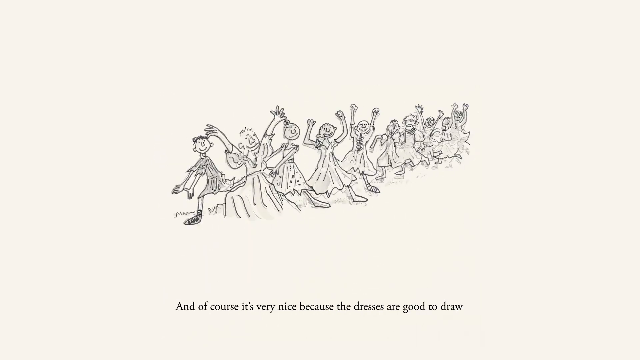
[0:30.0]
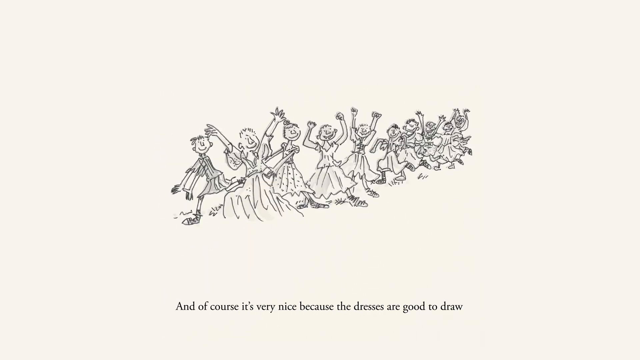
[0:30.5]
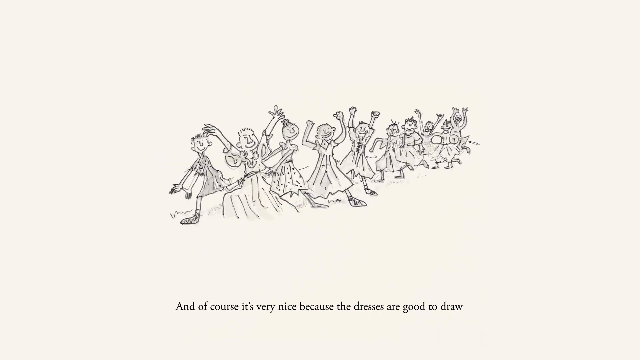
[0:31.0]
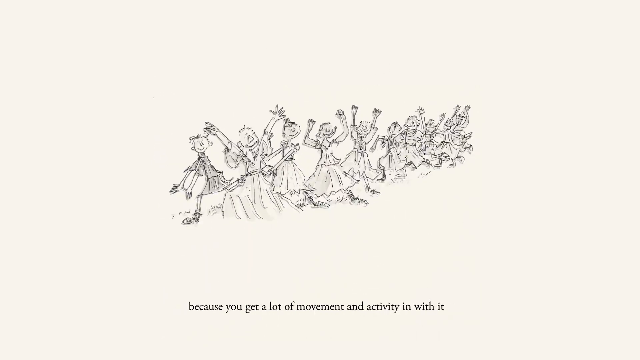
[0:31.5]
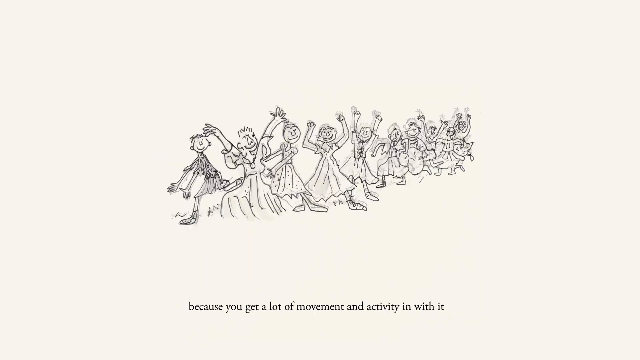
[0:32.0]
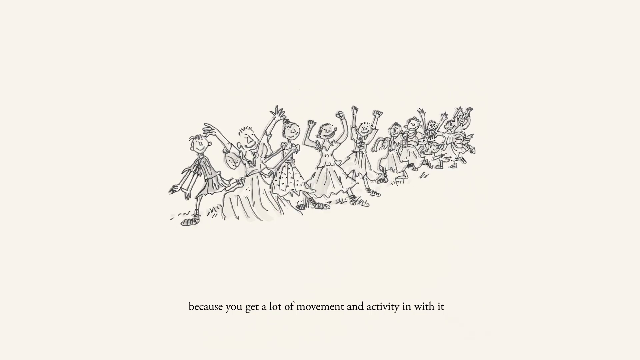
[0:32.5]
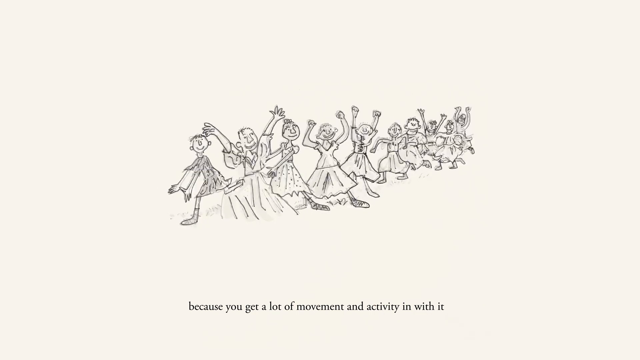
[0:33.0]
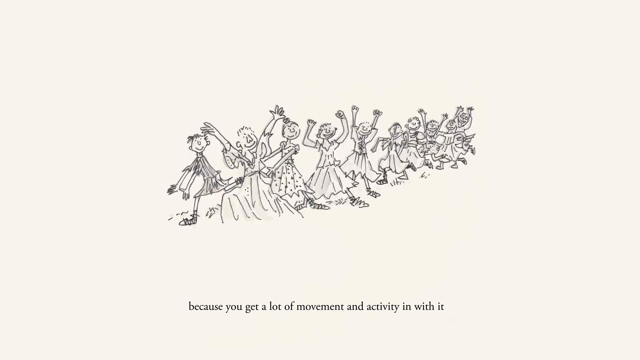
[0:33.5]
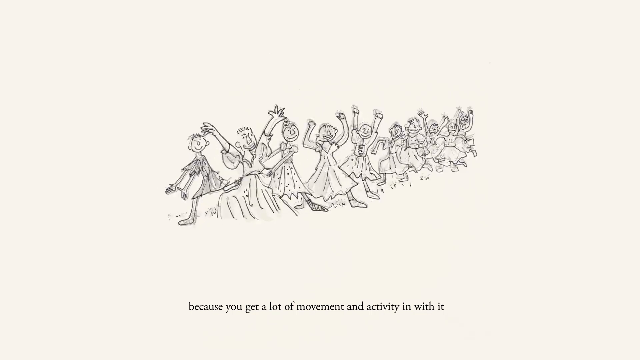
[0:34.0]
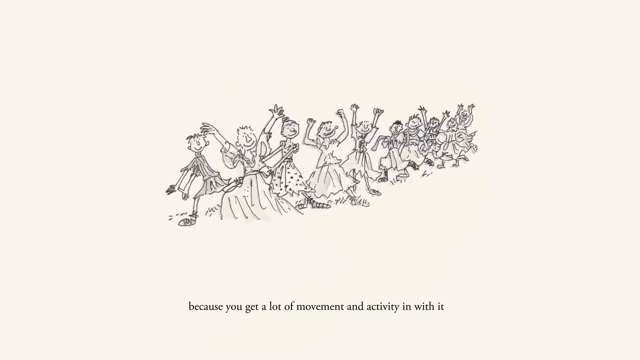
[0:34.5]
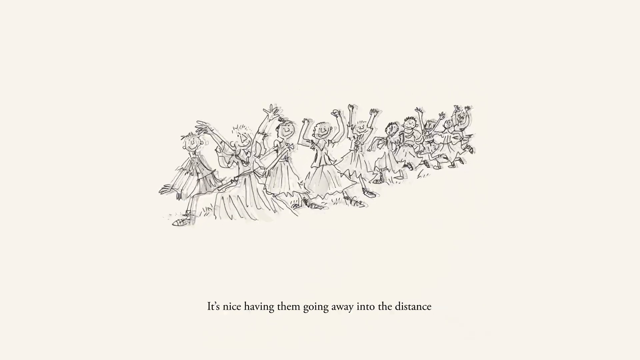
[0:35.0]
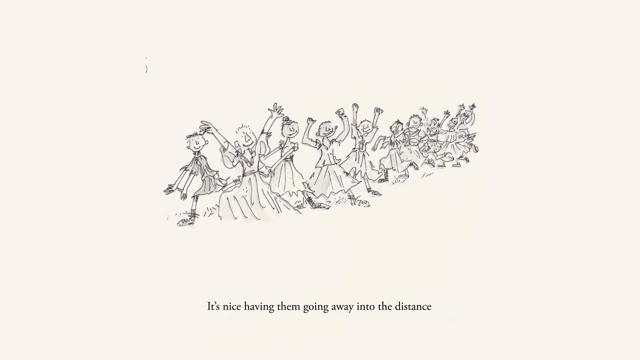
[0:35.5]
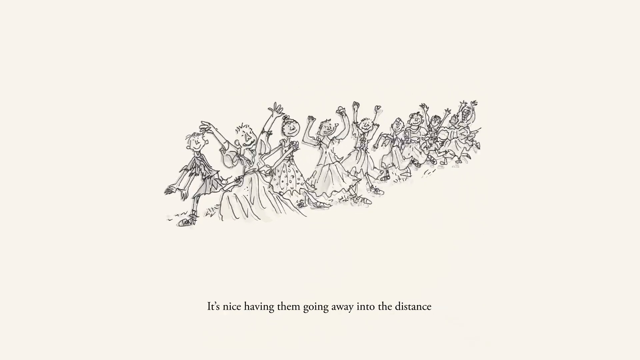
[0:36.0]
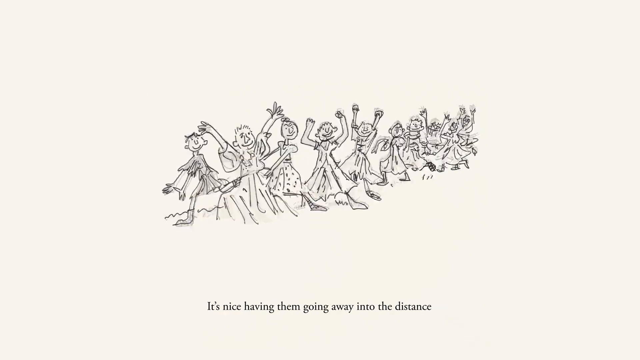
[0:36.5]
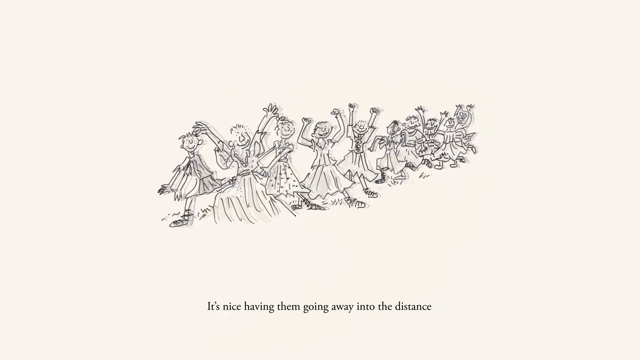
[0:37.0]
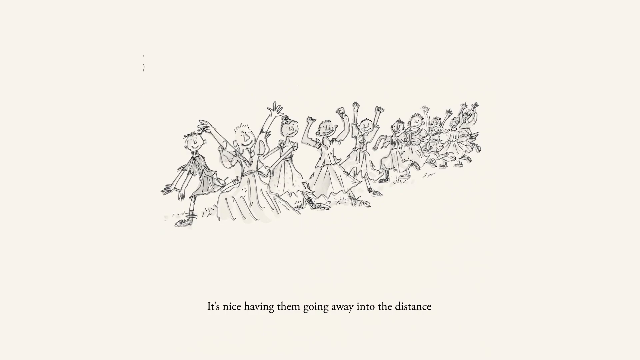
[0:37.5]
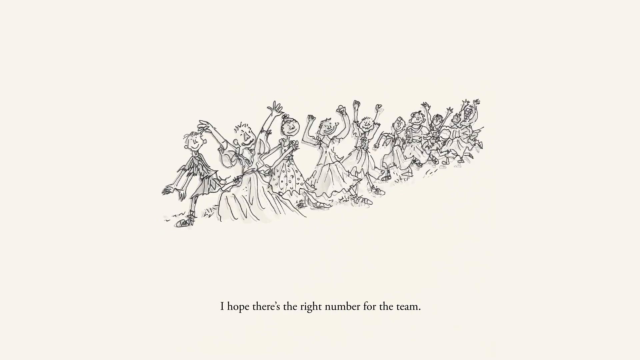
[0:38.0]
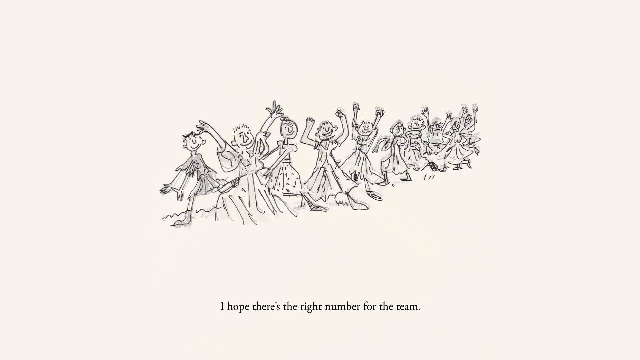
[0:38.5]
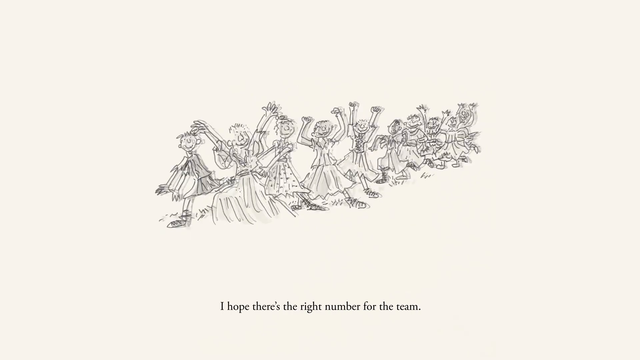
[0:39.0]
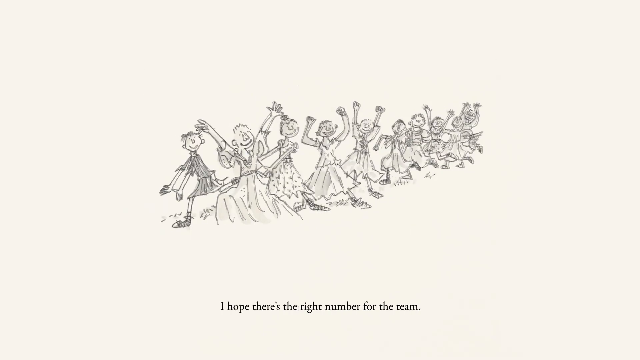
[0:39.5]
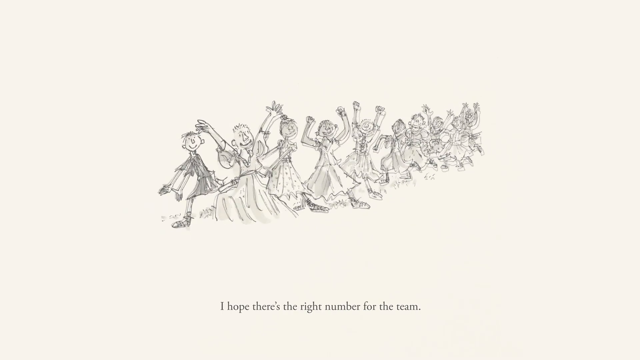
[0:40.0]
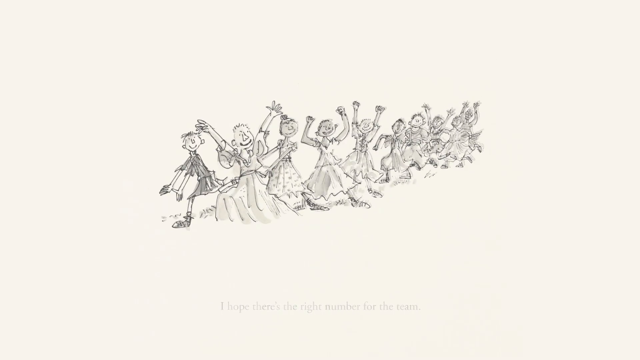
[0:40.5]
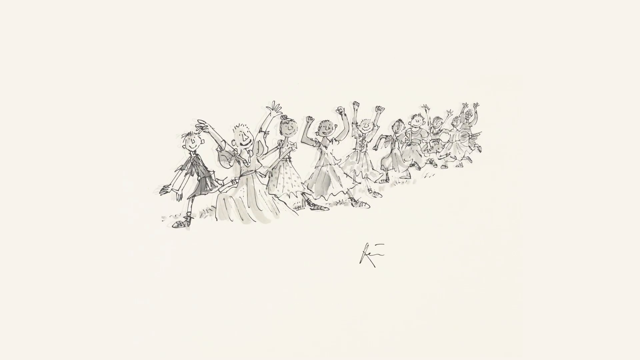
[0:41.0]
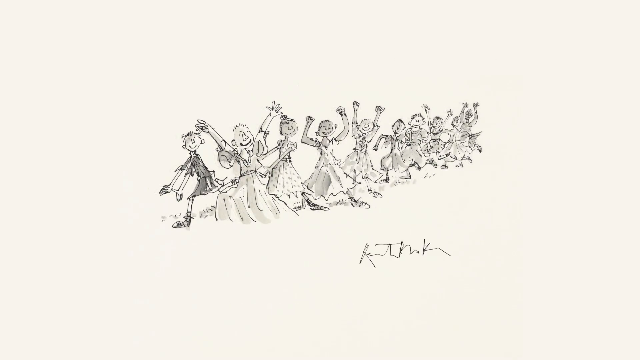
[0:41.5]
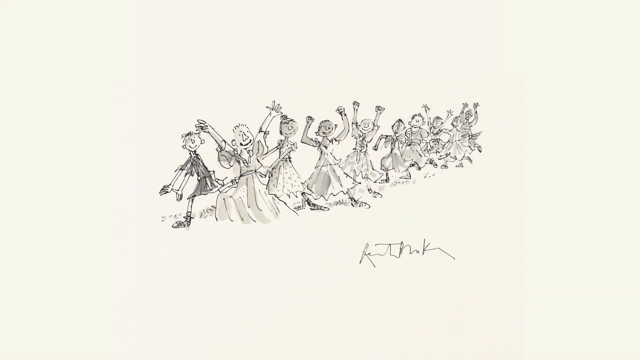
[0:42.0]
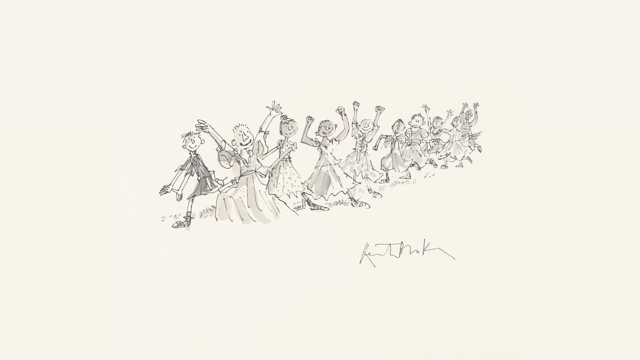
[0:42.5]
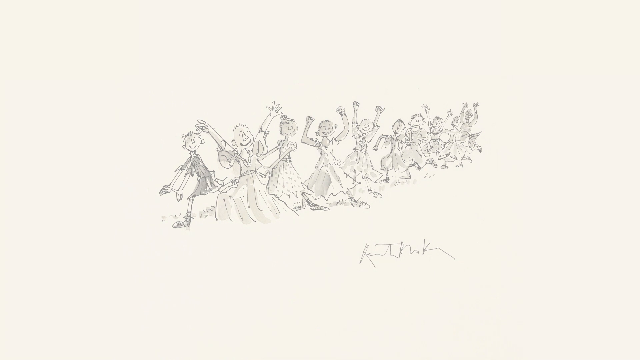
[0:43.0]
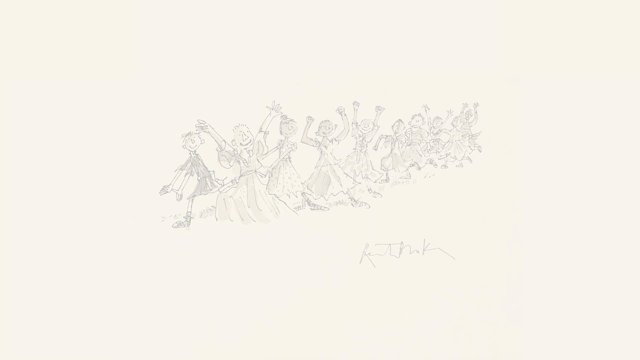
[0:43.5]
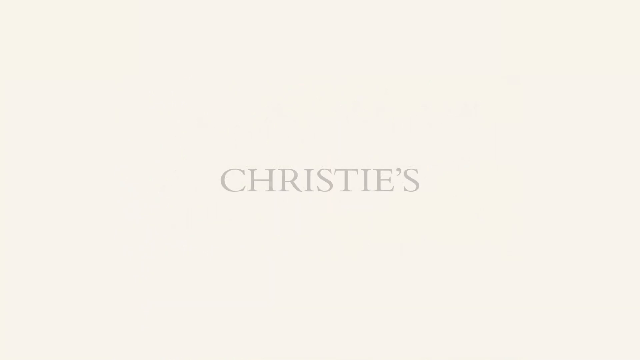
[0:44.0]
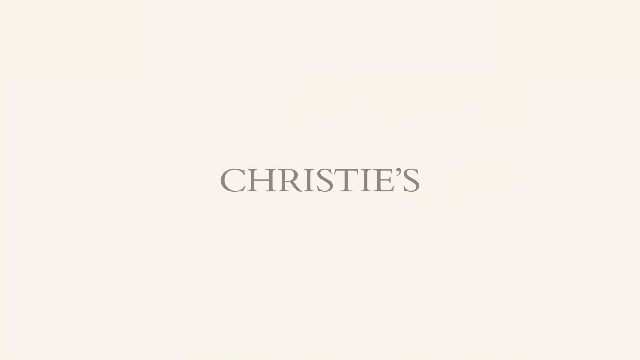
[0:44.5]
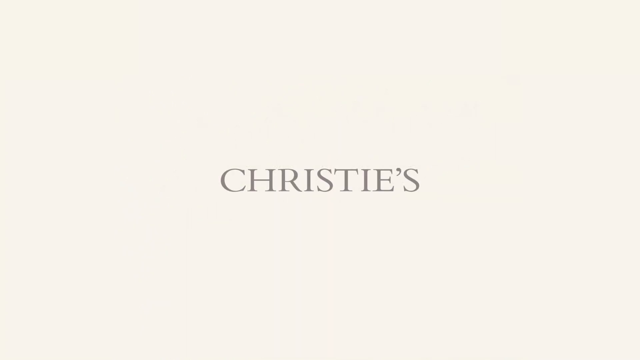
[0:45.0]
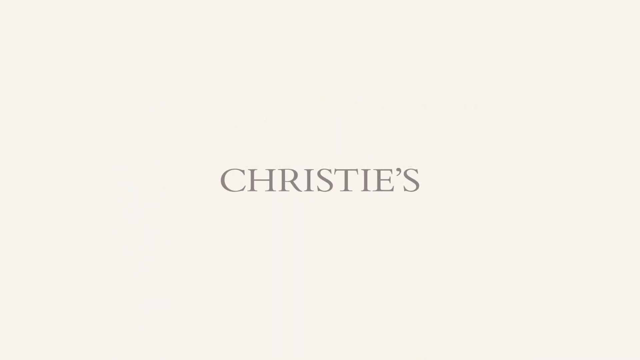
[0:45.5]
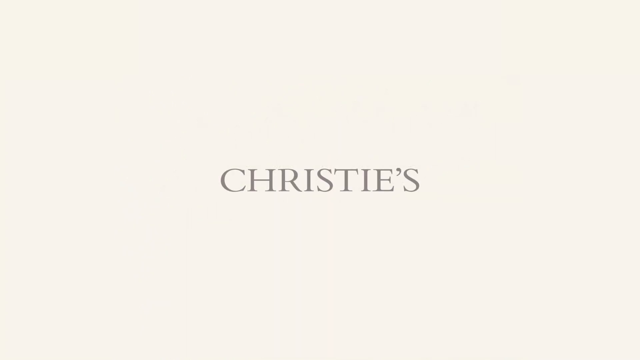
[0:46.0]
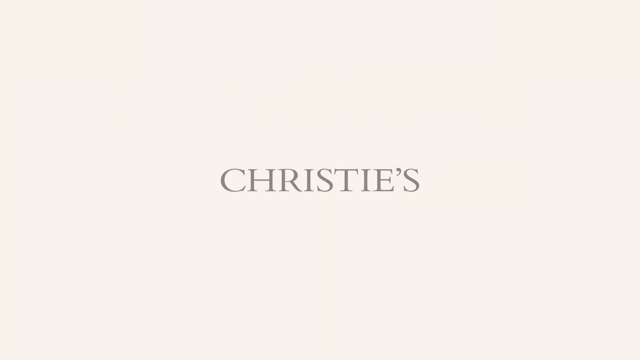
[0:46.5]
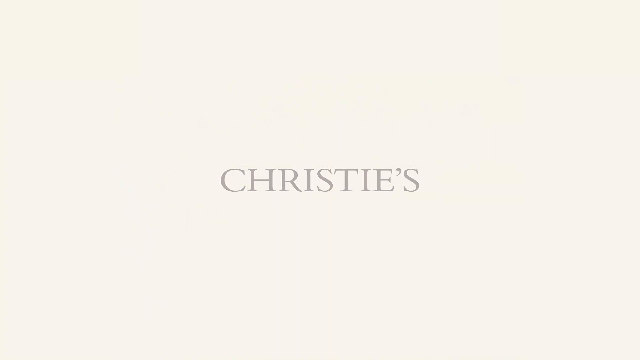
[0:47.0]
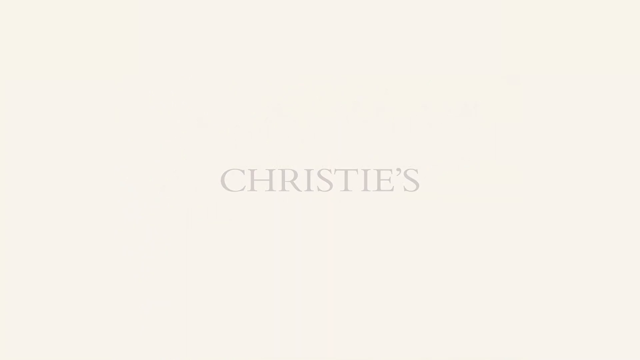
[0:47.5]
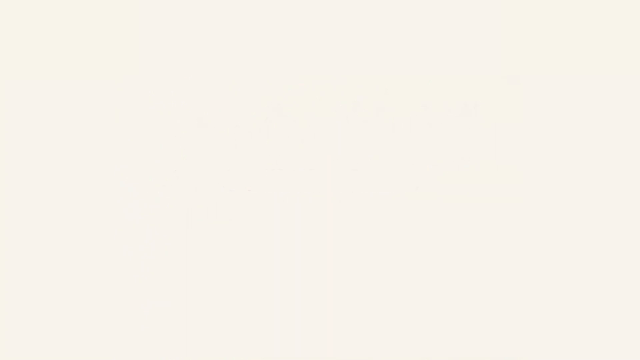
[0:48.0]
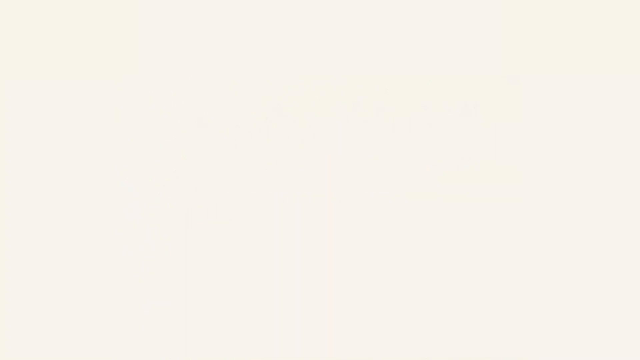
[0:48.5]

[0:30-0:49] Text reads "and of course, it's very nice because the dresses are good to draw." More pencil-drawn characters appear, all with dresses on, smiles on their faces, and arms up in the air gesturing in celebration. Text then reads "because you get a lot of movement and activity." The pencil-drawn characters appear as if they are moving because of the way they are drawn. About 10 children in dresses are shown with their hands up in the air. The author's signature comes across the bottom of the screen under the picture of the characters, and then the screen fades into the word "Christie's."